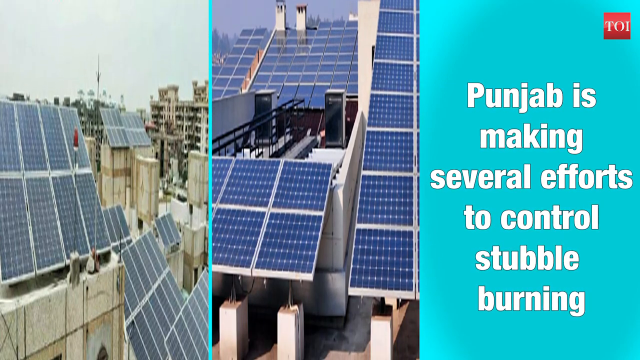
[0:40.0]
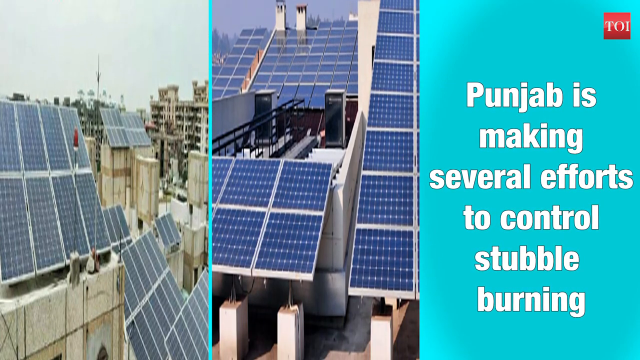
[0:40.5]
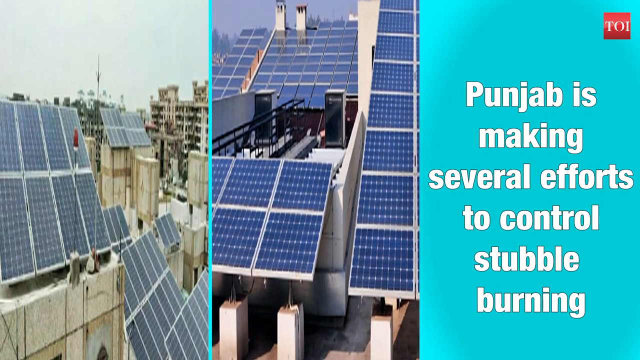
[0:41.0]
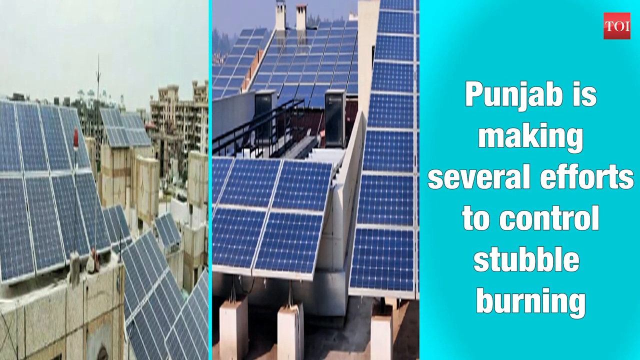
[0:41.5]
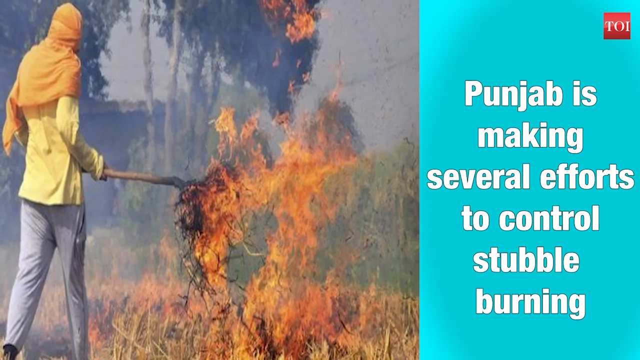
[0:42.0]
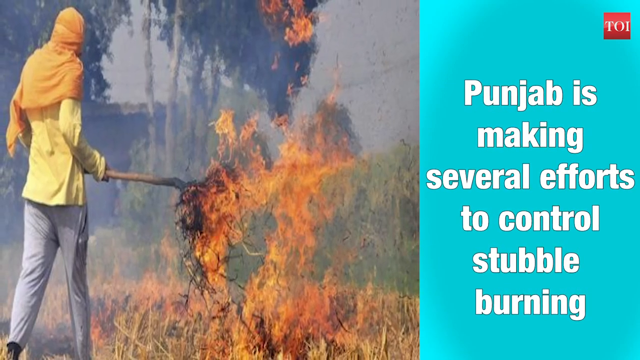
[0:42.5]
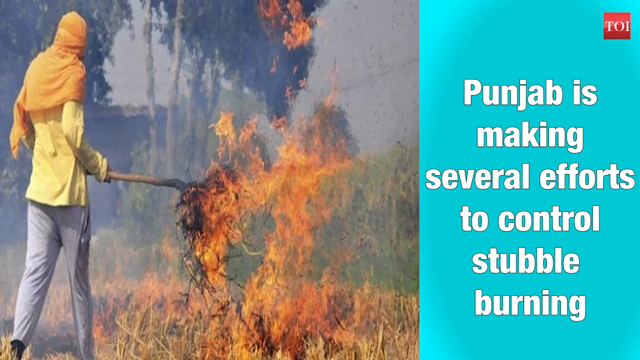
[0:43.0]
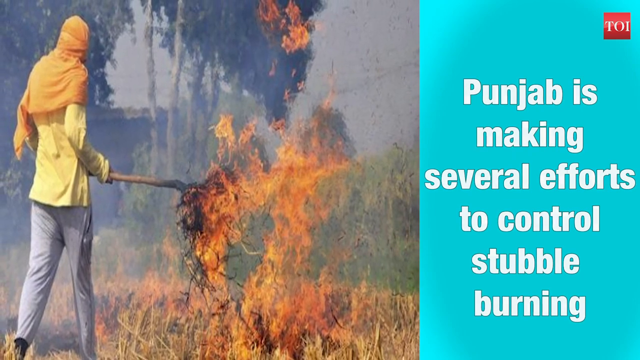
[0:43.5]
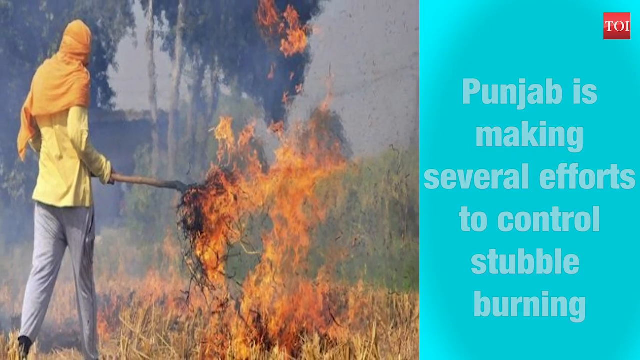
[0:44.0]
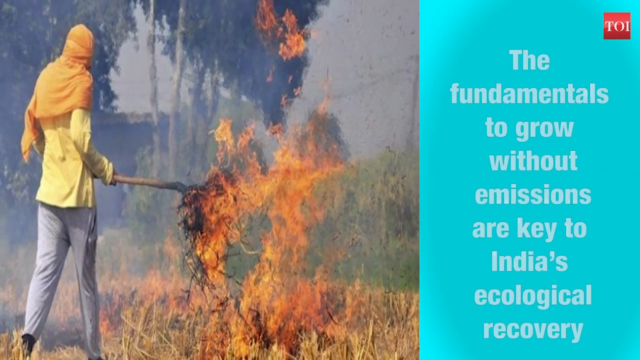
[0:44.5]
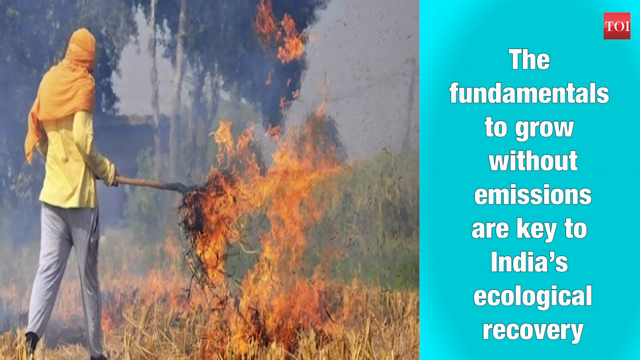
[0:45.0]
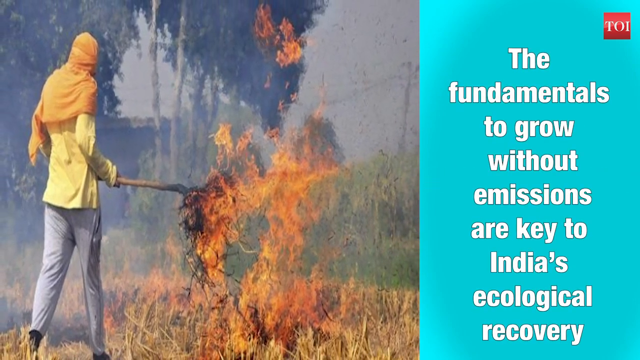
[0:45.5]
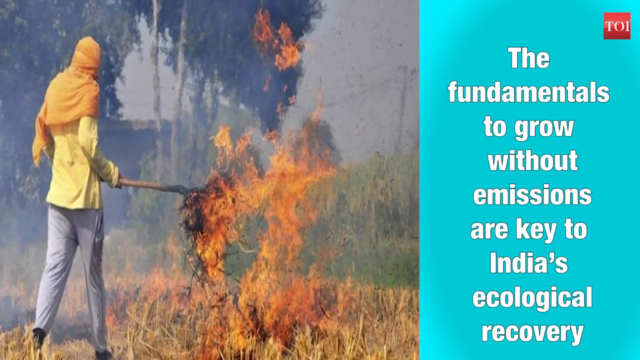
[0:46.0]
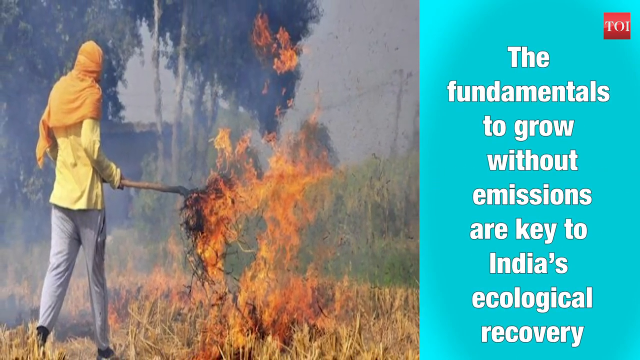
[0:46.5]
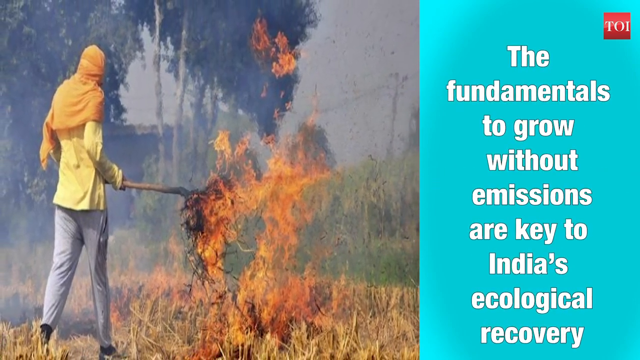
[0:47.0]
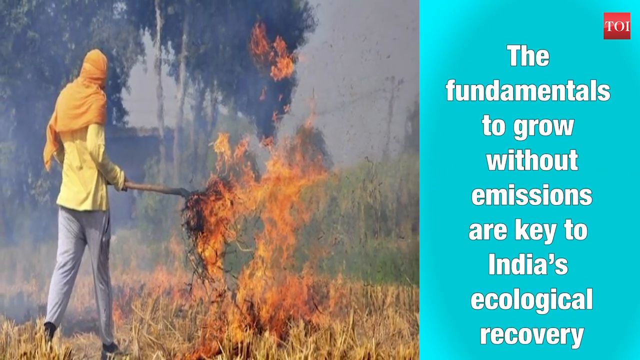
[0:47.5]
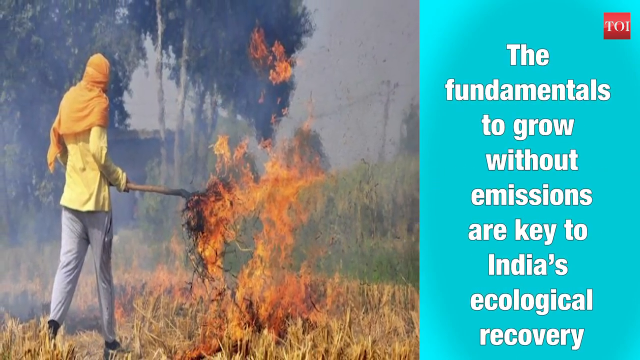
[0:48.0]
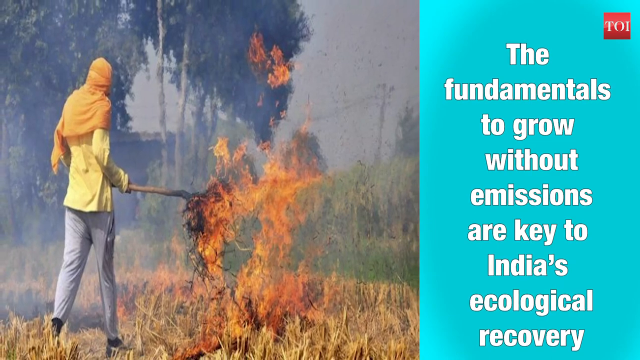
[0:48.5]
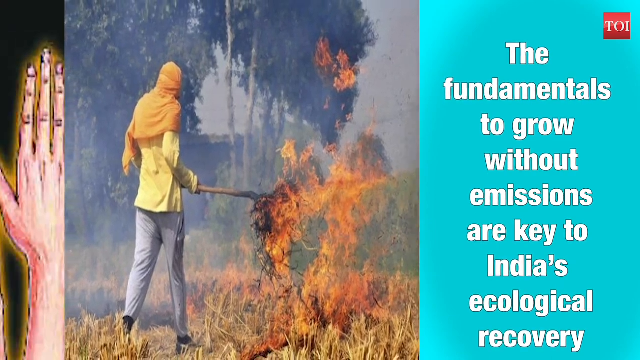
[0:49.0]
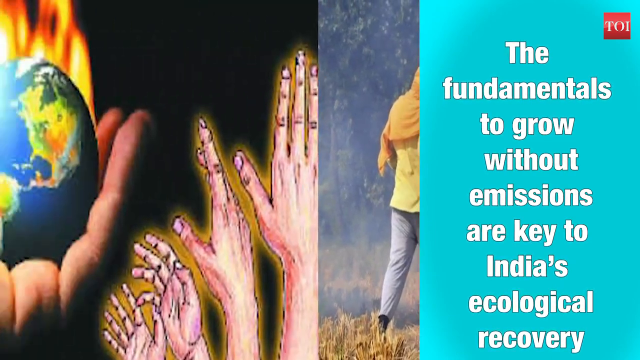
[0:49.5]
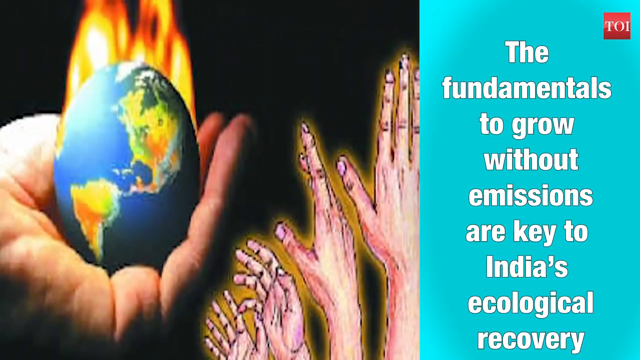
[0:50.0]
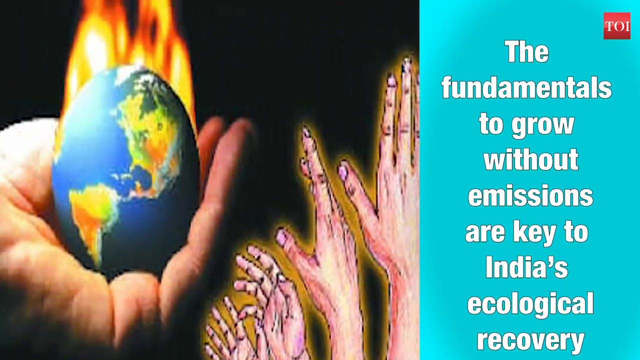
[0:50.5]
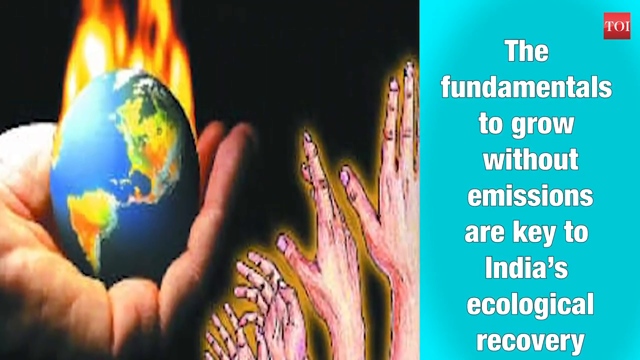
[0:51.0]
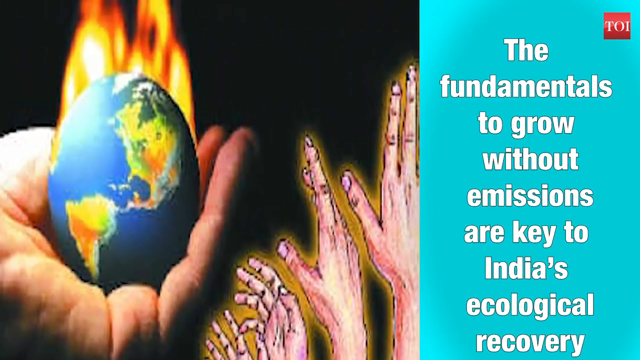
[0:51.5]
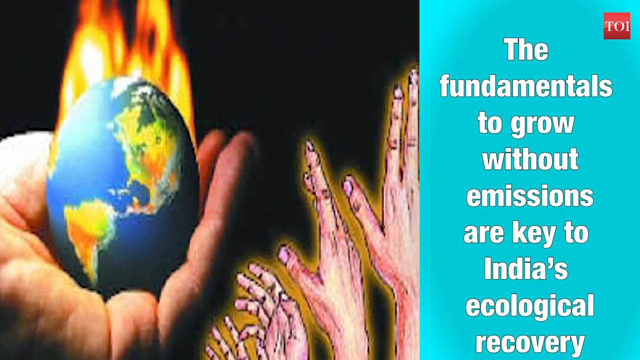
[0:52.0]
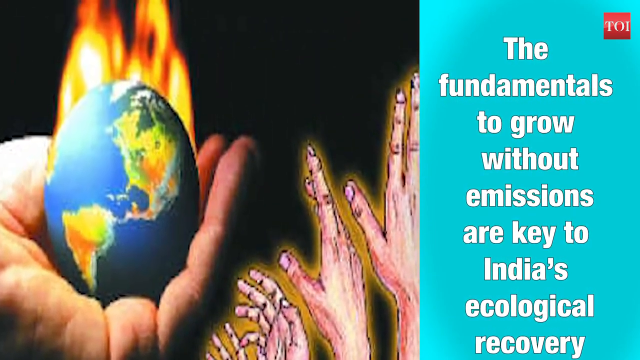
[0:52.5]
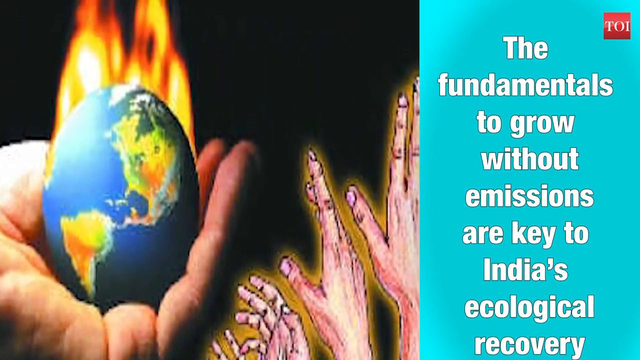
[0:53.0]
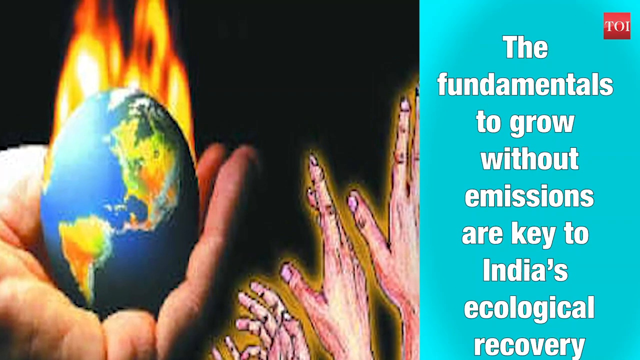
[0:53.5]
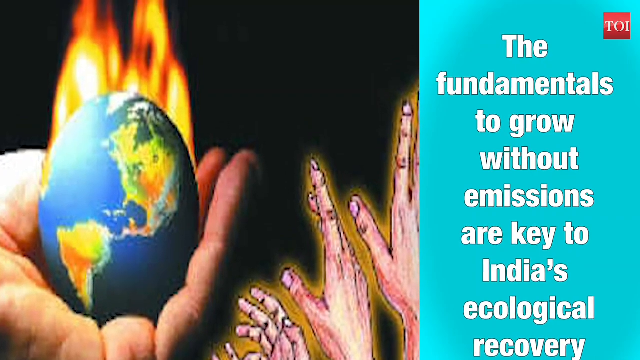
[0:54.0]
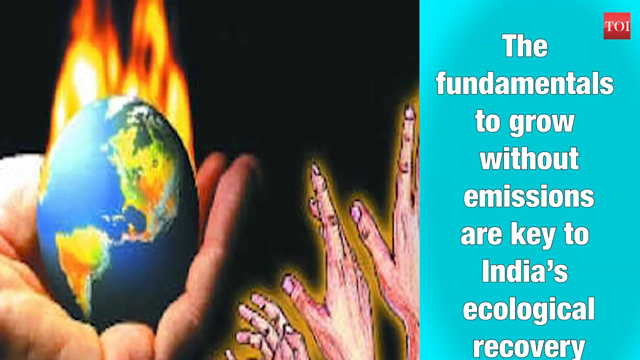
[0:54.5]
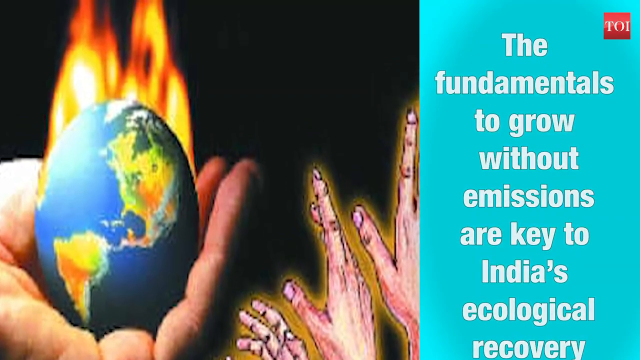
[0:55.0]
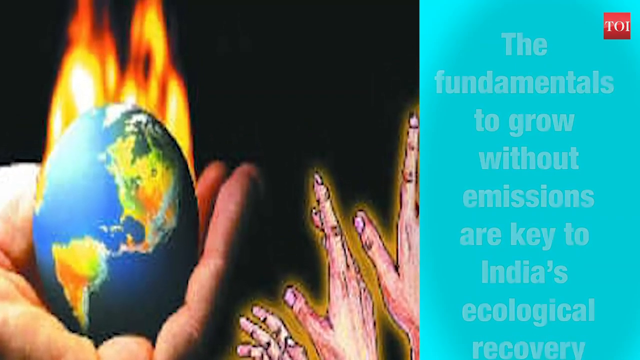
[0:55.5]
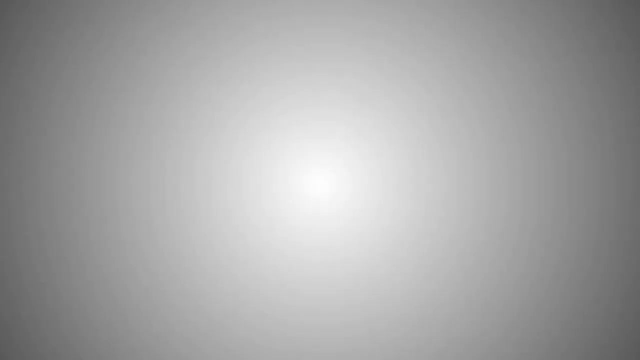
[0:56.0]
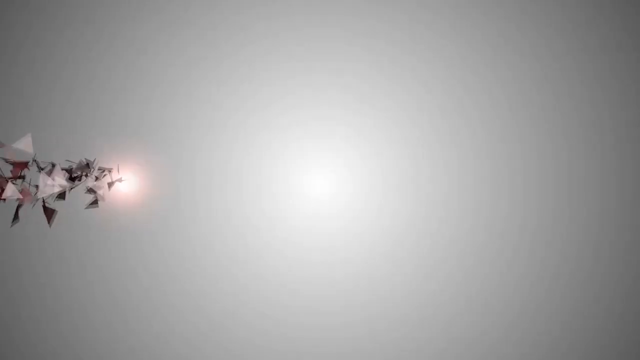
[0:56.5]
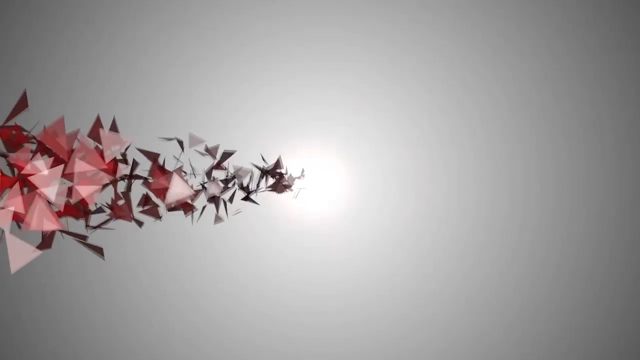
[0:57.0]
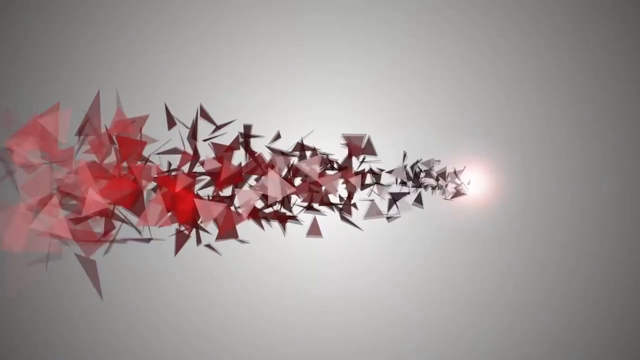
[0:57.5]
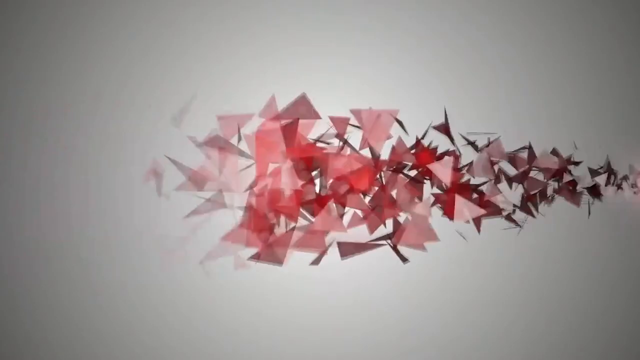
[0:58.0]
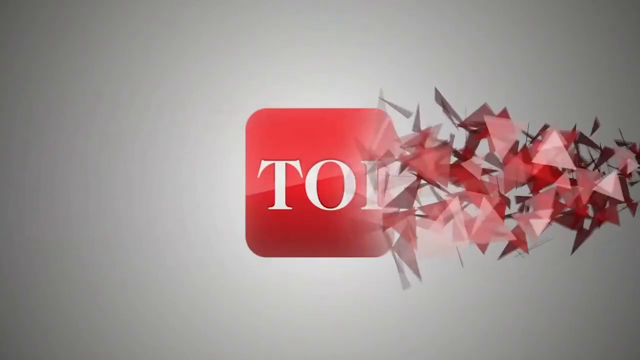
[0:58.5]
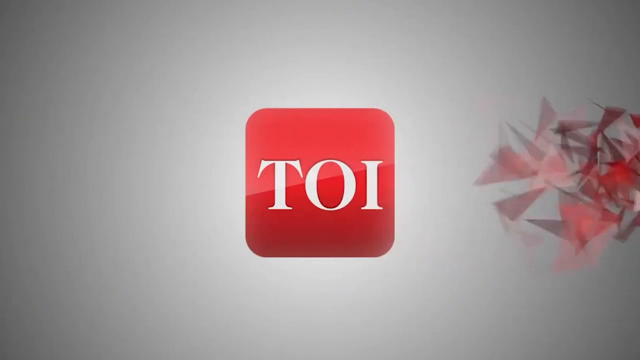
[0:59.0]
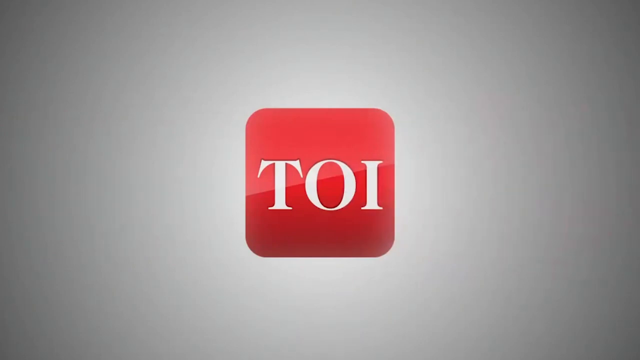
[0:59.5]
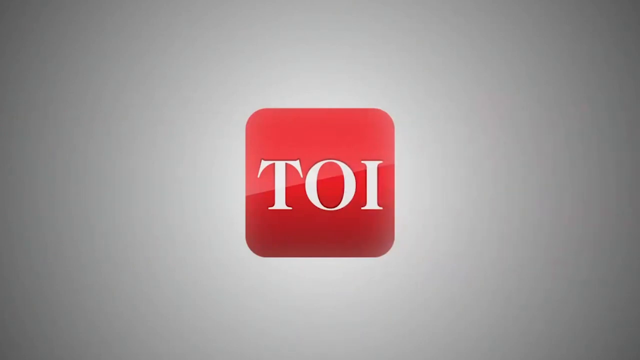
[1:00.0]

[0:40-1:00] On the left-hand side is an image of solar panels placed at angles on top of what look like slum-type buildings, then a small aqua line, and then nicer dark blue solar panels on some kind of concrete building. Next to that is an aqua rectangle with a small logo in the upper right-hand corner, a red square that says "TOI", and white text reading "Punjab is making several efforts to control stubble burning". The video cuts to an image of a man holding a large stick. He wears long, whitish-gray pants, a long white shirt with long sleeves, and an orange scarf wrapped around the back of his head and his shoulders. Trees are in the background and it is very gray. There is a grass area with a big fire, and his stick is in the fire. The text on the right-hand side changes to "the fundamentals to grow without emissions are key to India's ecological recovery". The shot zooms out of the image and switches to a stock image on a black background of a light-skinned, cupped hand holding the earth, which is on flames. Next to it is an illustration of hands: part of a light-skinned hand facing away, showing its back; next to it on the left a hand slightly turned; and a hand turned fully so the palm is visible at an angle, with glowing light all around. The shot zooms in toward that image. Then, on a black background, a number of red triangles that look like shards move across the screen, revealing the curved red square logo that says "TOI" in the middle.